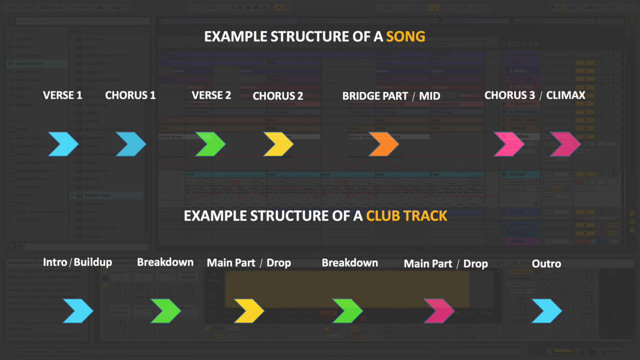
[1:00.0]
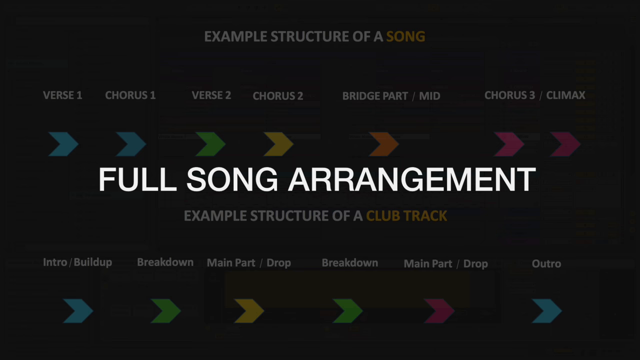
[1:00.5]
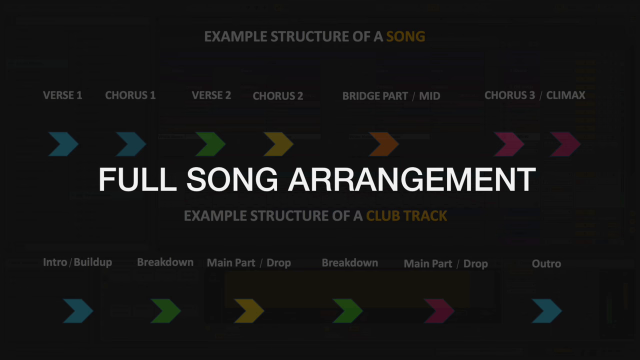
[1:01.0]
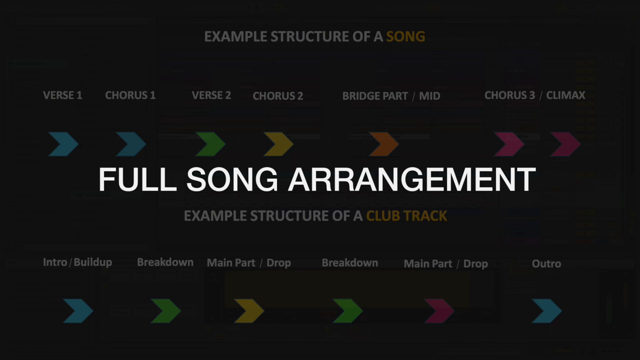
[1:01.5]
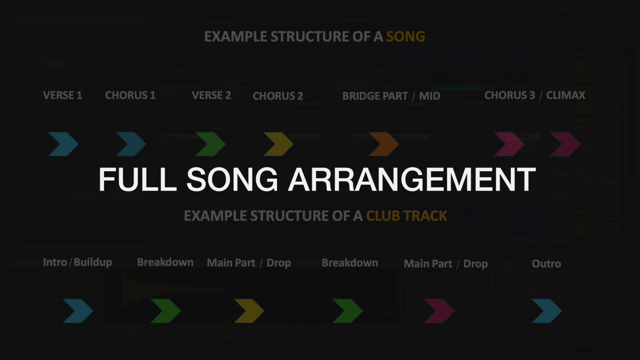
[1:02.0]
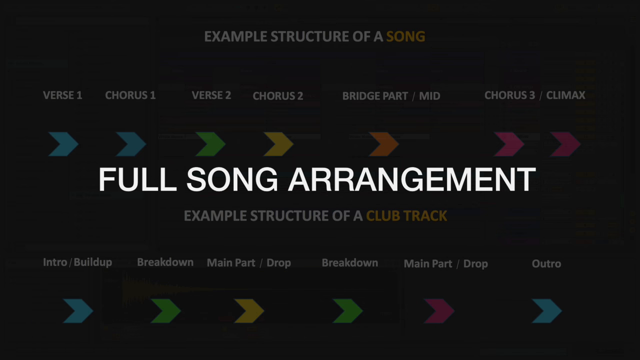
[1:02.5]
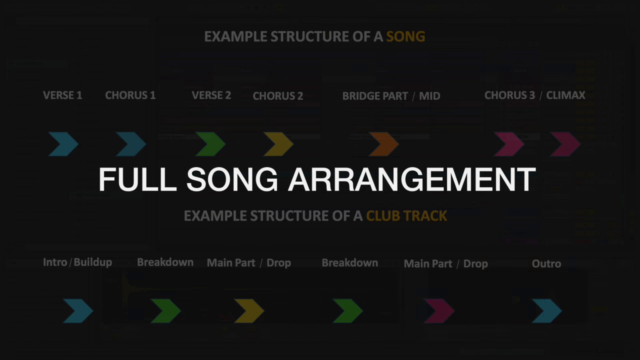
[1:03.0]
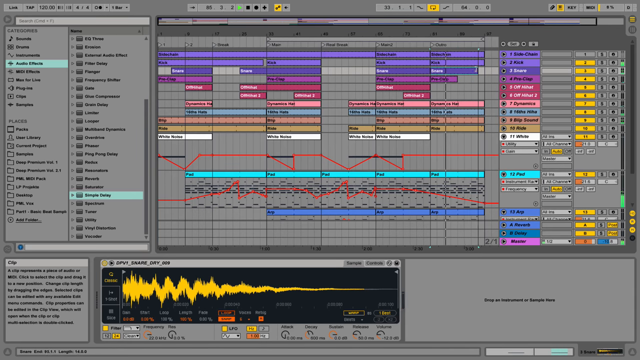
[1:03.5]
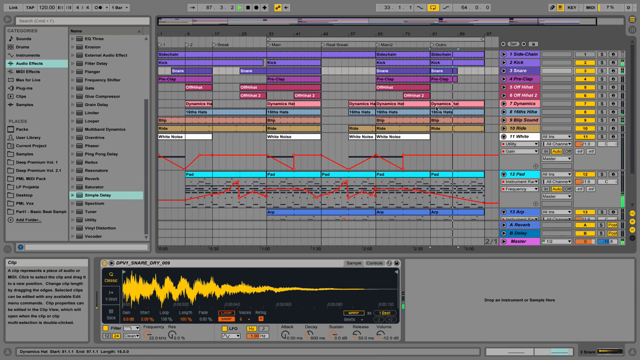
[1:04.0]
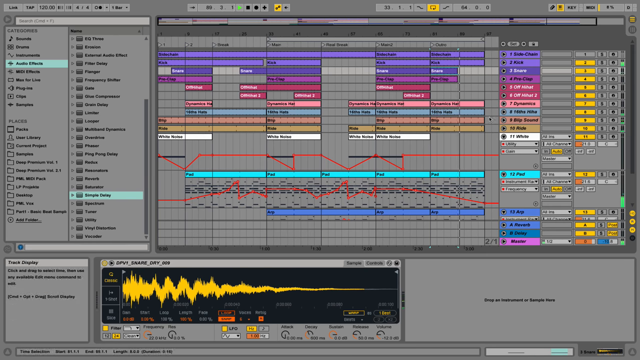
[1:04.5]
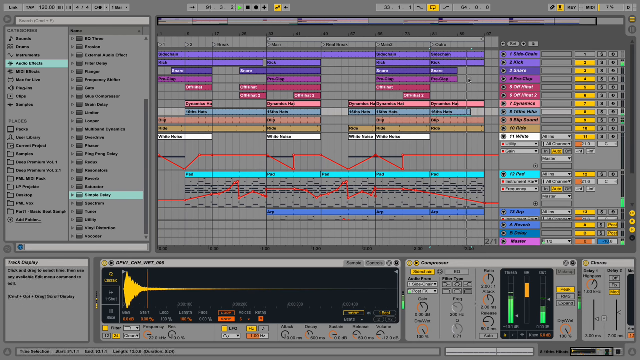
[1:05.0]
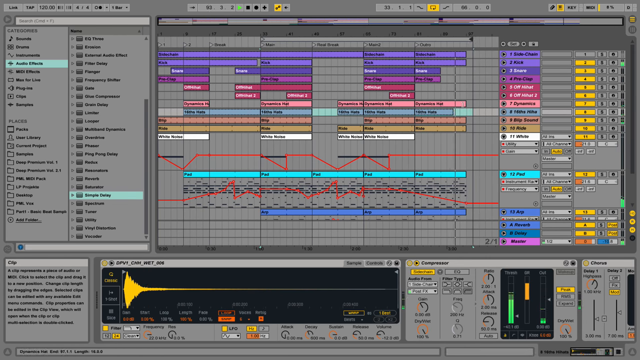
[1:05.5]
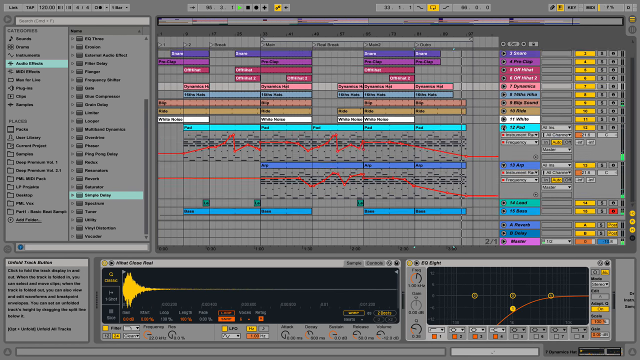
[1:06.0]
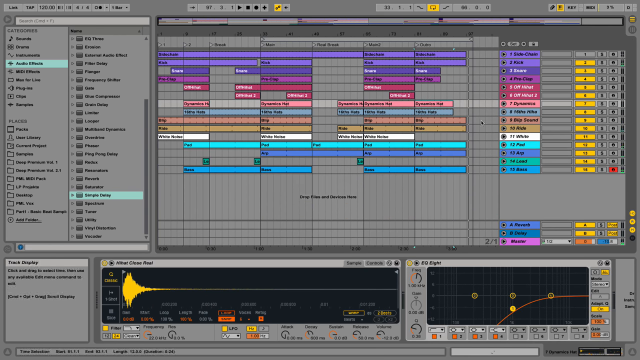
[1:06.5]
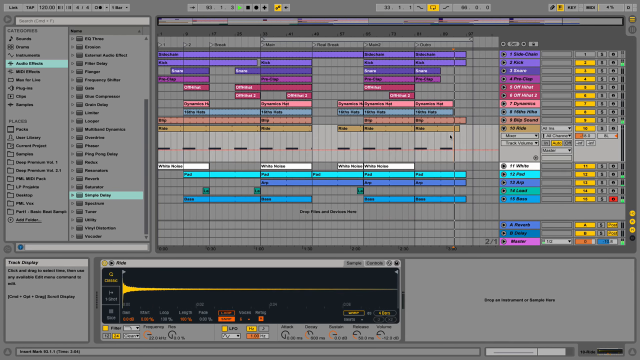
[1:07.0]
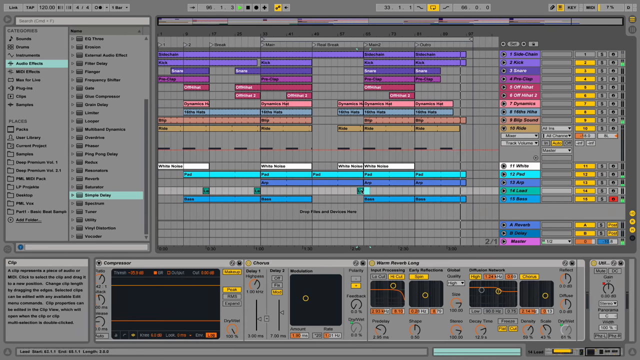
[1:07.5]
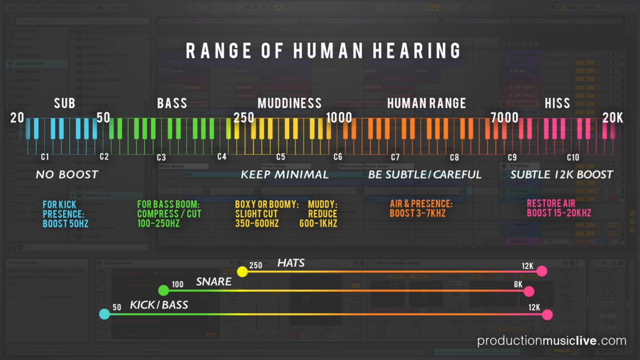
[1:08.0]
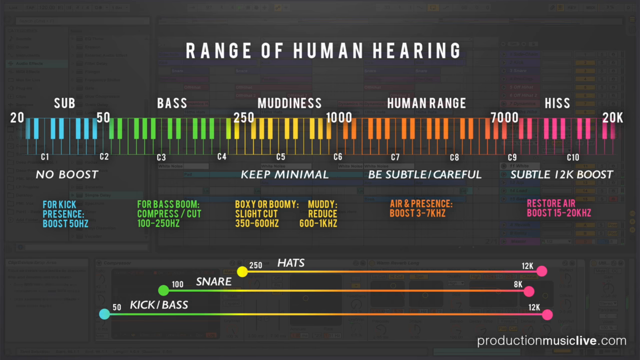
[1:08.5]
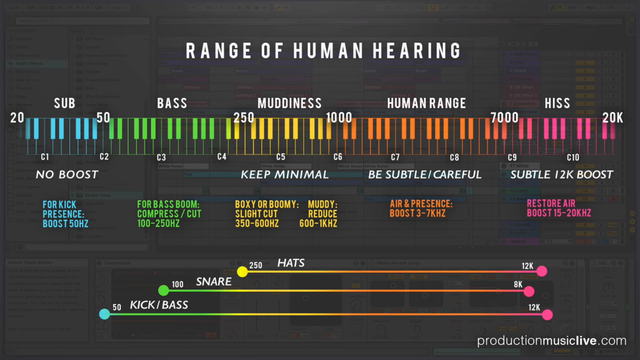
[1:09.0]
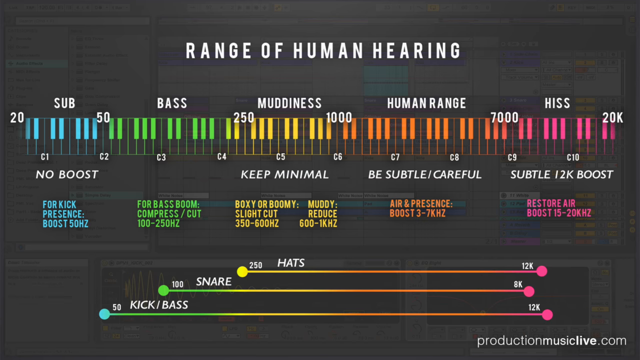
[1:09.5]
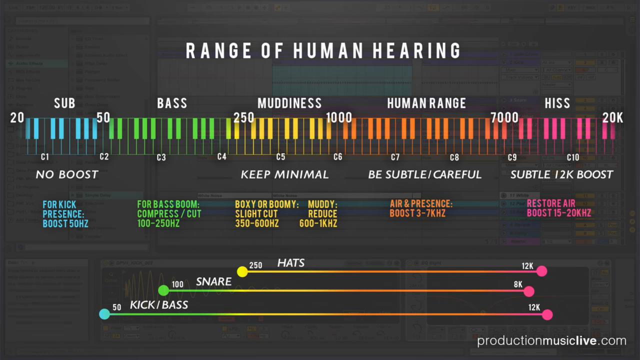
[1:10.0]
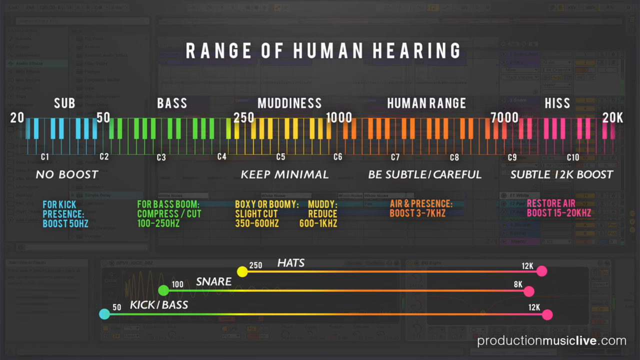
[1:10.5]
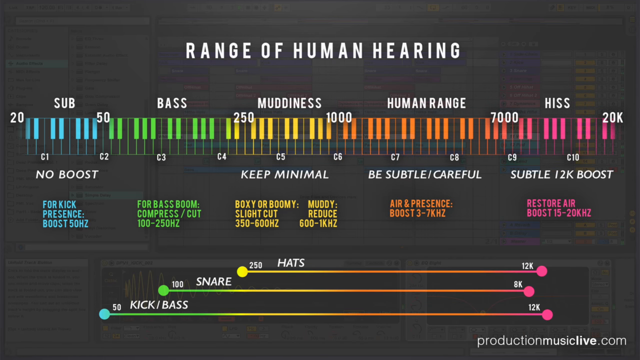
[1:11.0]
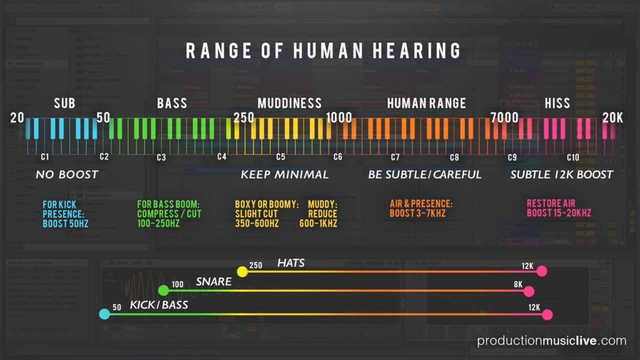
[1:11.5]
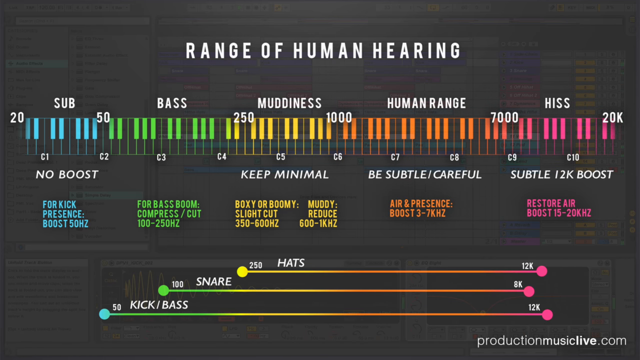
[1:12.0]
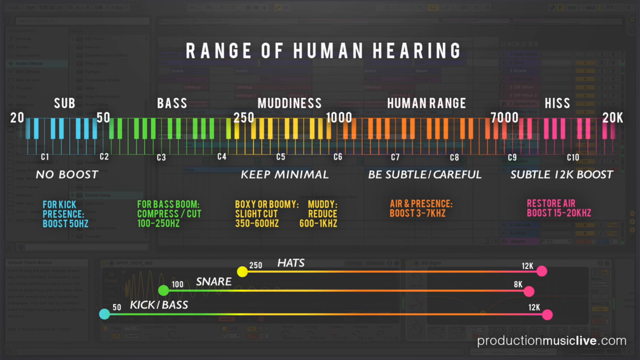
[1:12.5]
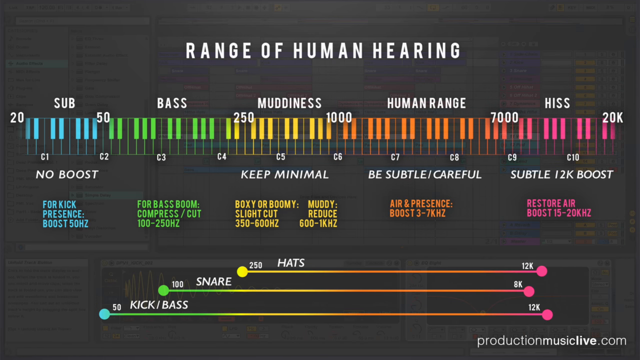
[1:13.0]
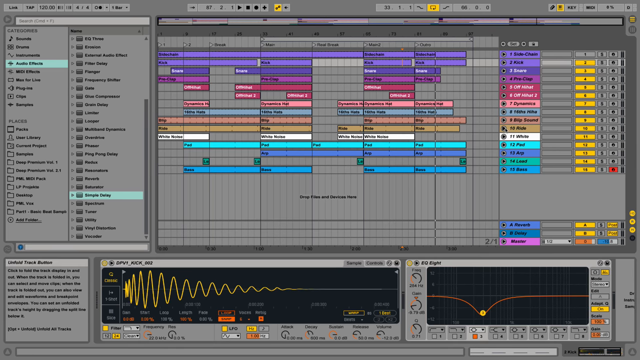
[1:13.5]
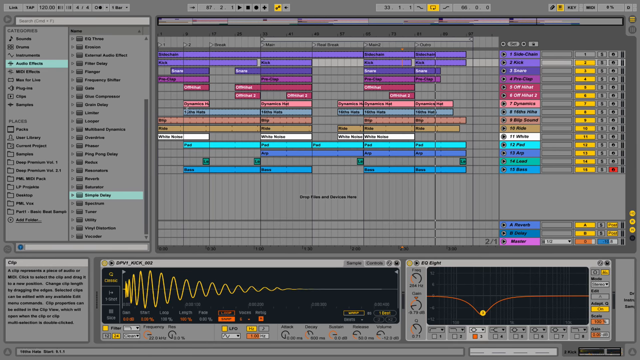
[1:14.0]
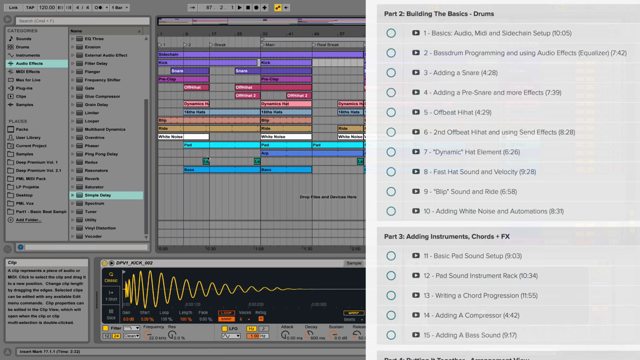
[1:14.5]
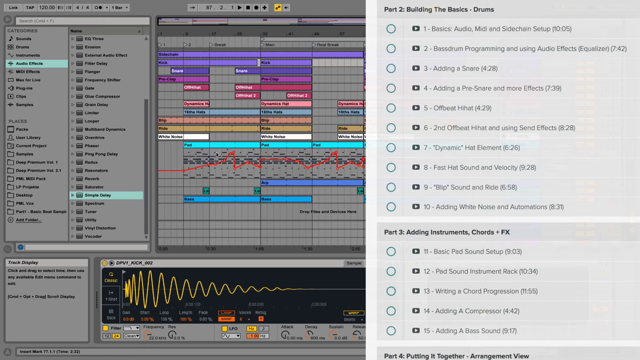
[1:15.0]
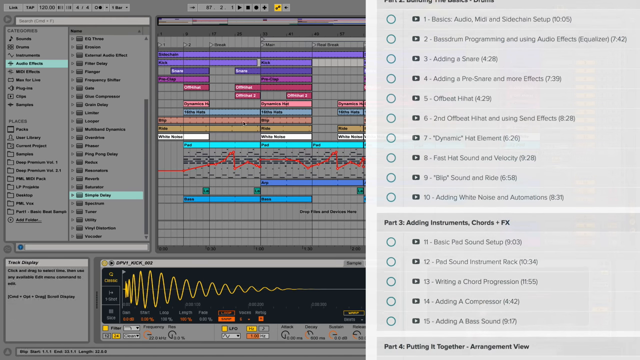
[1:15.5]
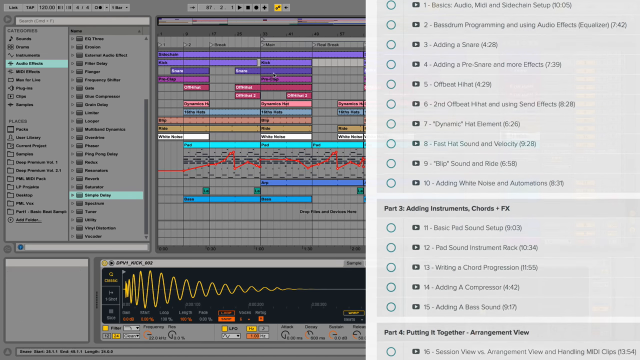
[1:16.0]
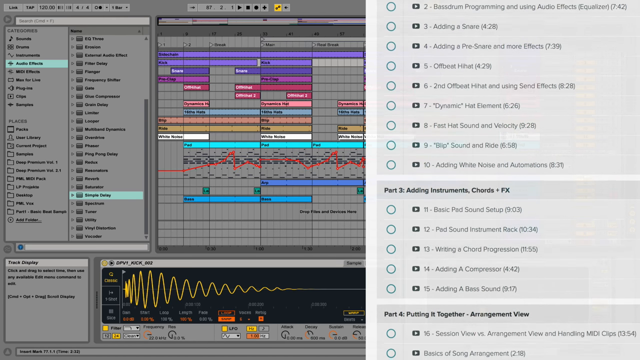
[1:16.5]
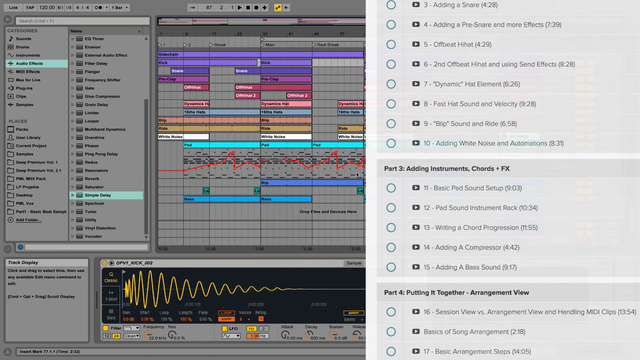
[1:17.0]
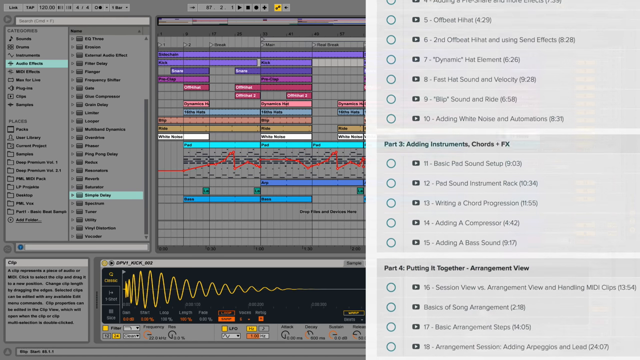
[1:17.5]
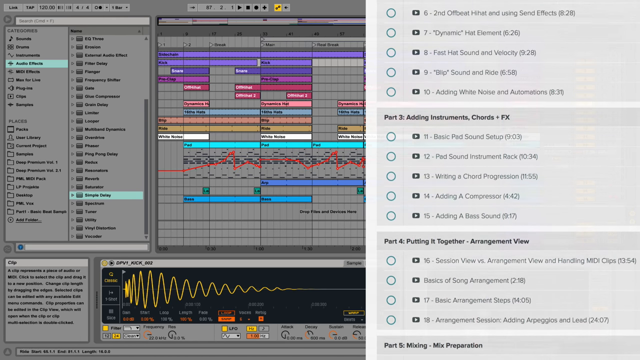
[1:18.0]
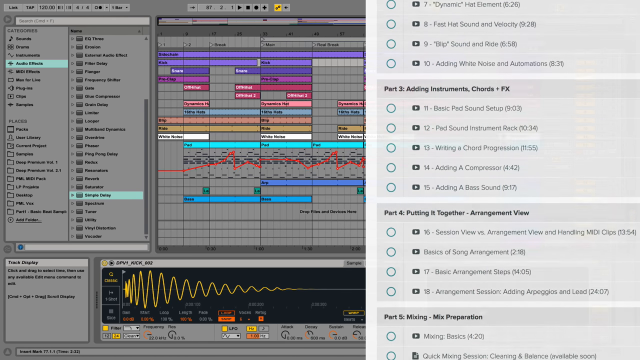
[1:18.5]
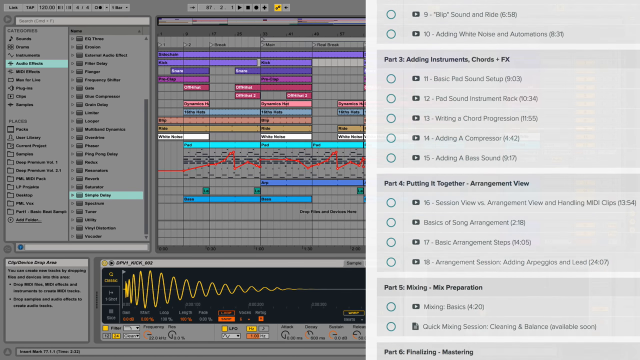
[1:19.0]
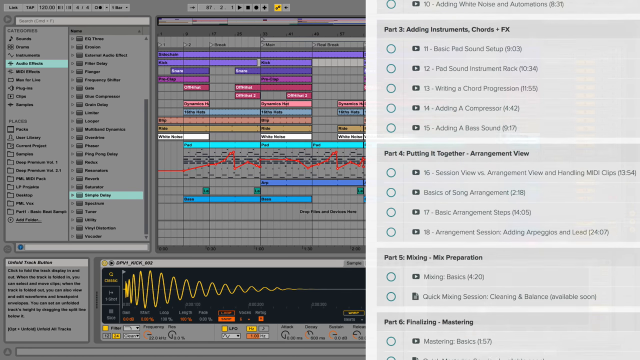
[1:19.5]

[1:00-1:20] On a black background are two titles. Under "example structure of a song" are verse 1, chorus 1, verse 2, chorus 2, bridge part mid, and chorus 3 climax, color-coded in blue, green, yellow, orange, and pink. Below that, "example structure of a club track" lists intro, build up, breakdown, main part drop, breakdown, main part drop, and outro, color-coded in the same colors. A new item, "full song arrangement," follows, and the application is shown as the work is done very swiftly, making it hard to see exactly what is being done. Another black background shows the text "range of human hearing," color-coded in blue, green, yellow, orange, and pink, numbered and labeled sub, bass, minus, human range, and hiss, with hats, snare, and kick bass listed below. The complex interface returns, and on the right-hand side a page is pulled up showing what has to be clicked on, with several parts pulling up before it stops.